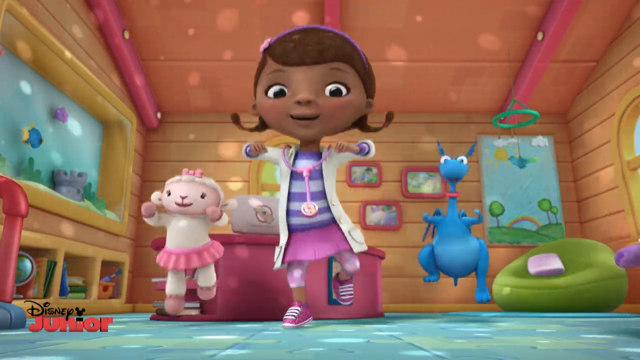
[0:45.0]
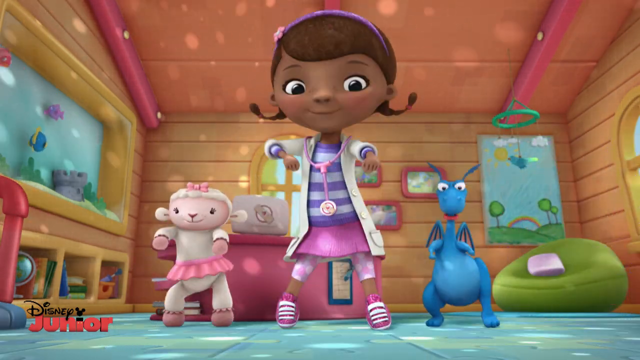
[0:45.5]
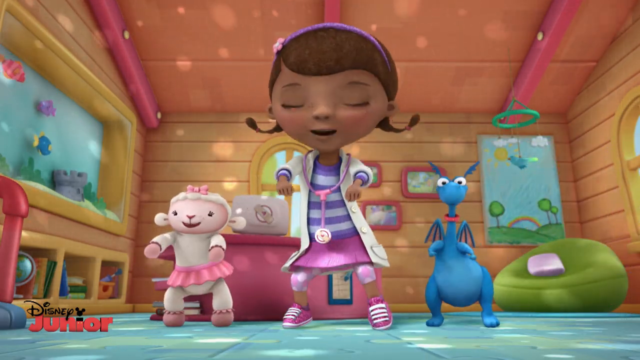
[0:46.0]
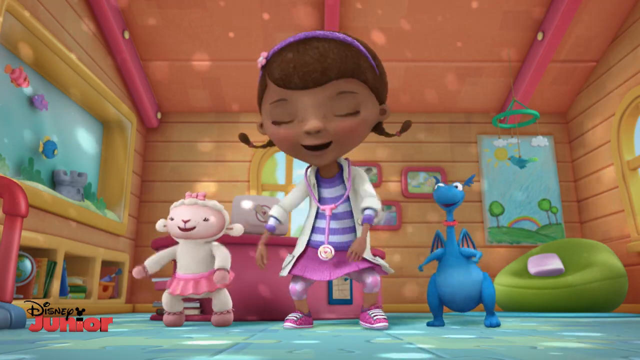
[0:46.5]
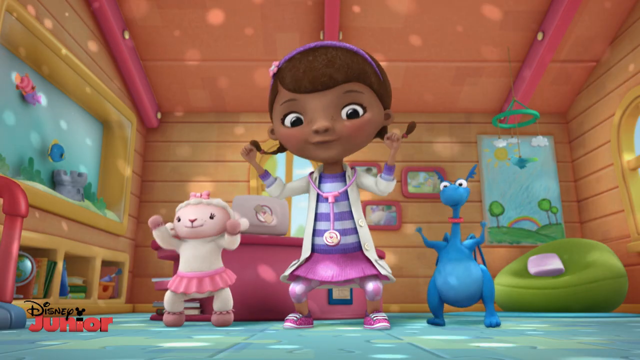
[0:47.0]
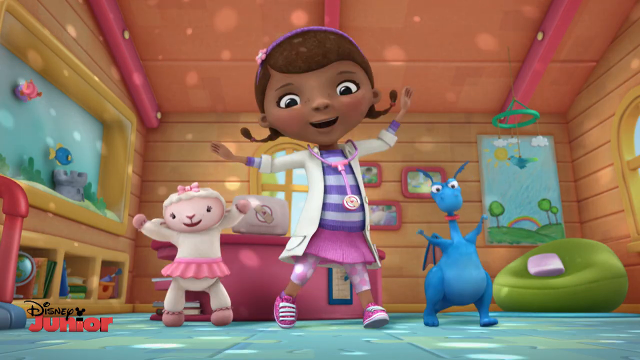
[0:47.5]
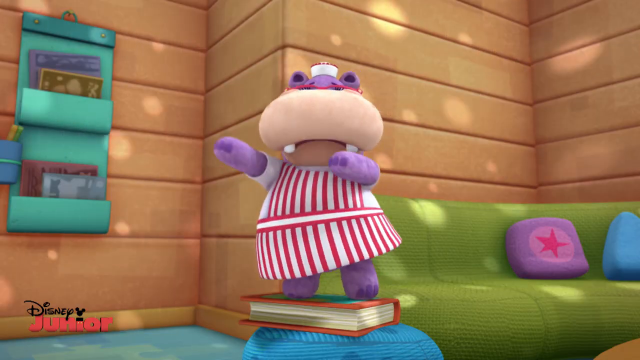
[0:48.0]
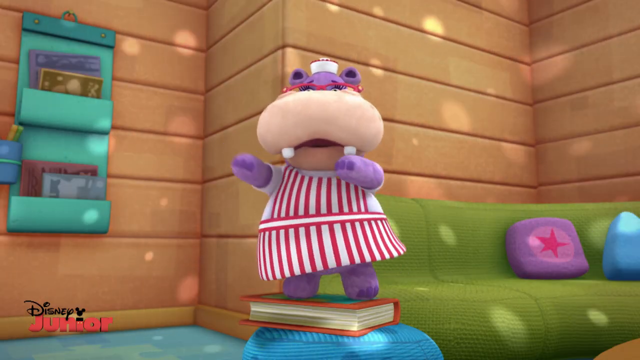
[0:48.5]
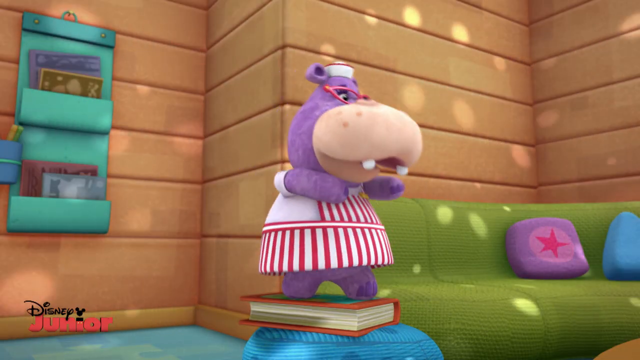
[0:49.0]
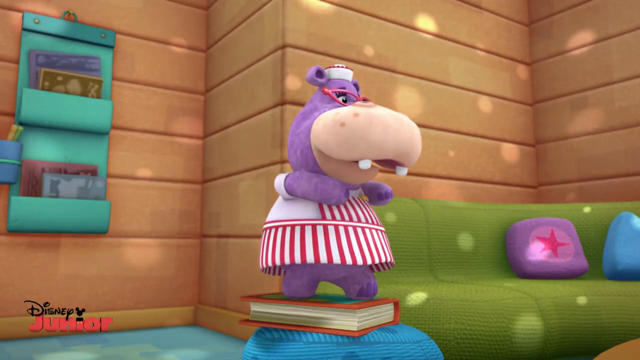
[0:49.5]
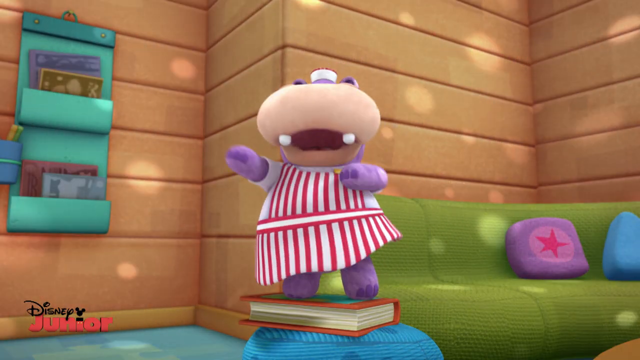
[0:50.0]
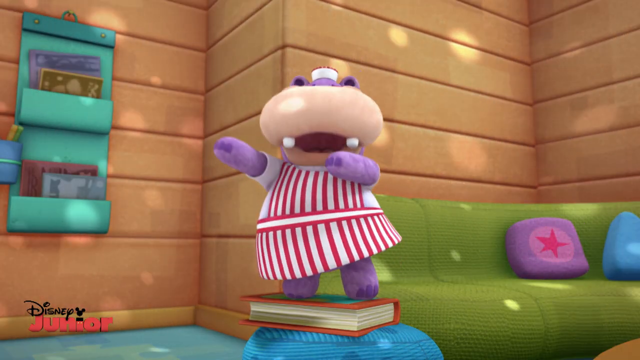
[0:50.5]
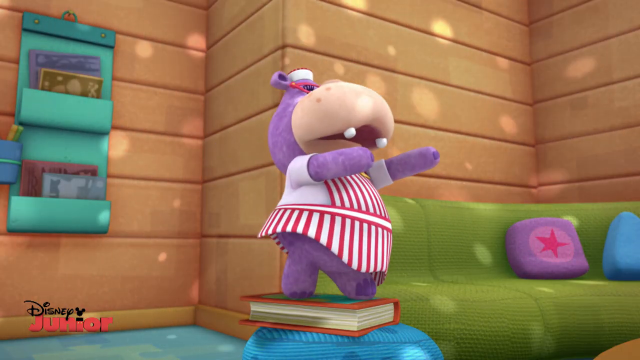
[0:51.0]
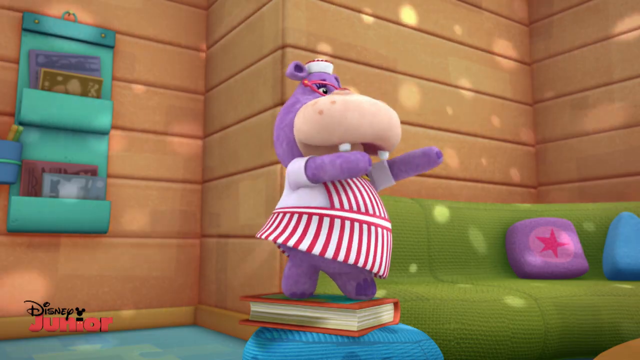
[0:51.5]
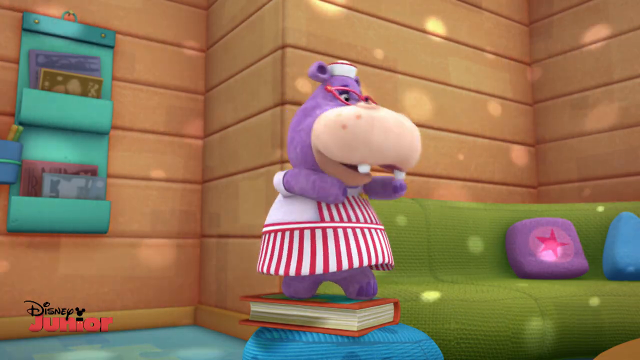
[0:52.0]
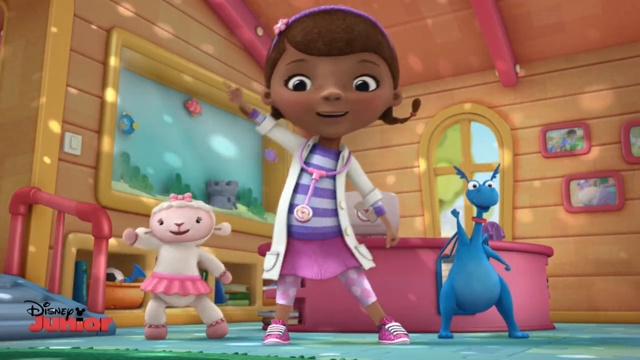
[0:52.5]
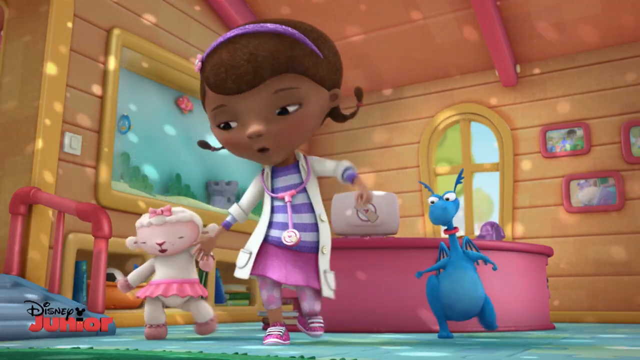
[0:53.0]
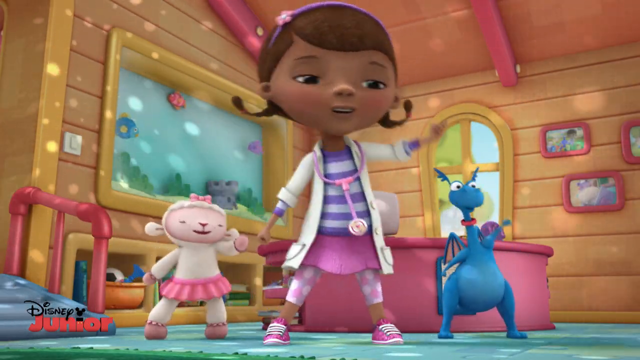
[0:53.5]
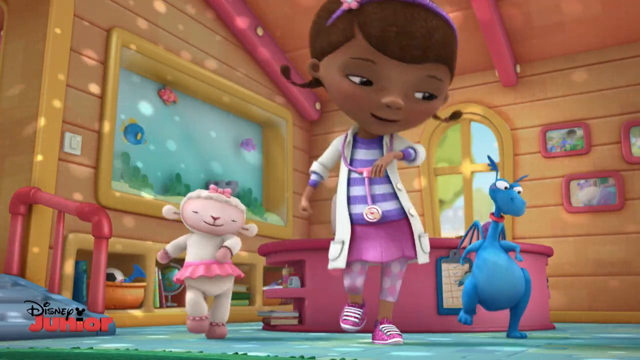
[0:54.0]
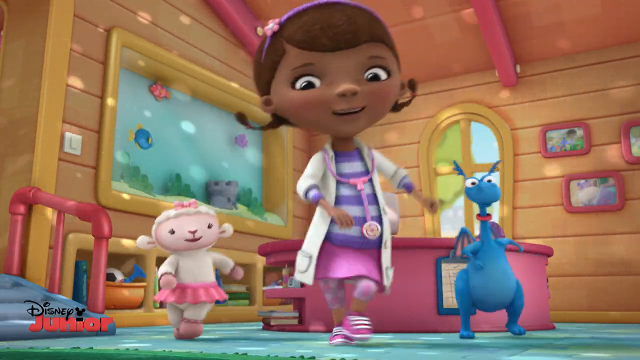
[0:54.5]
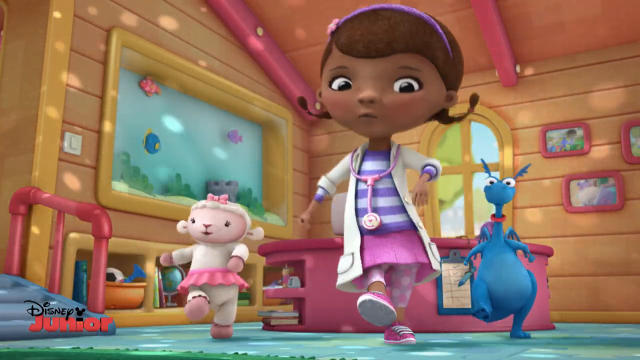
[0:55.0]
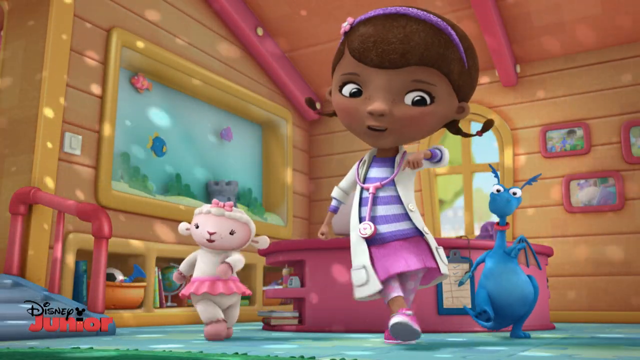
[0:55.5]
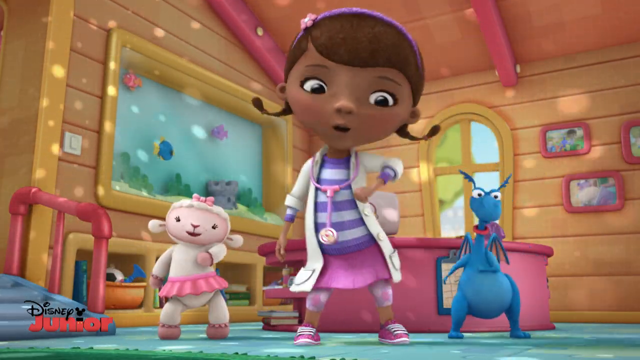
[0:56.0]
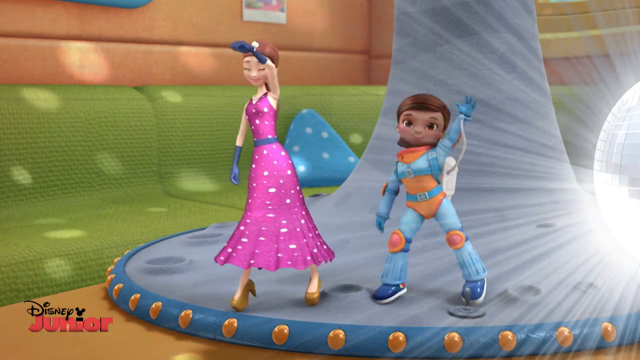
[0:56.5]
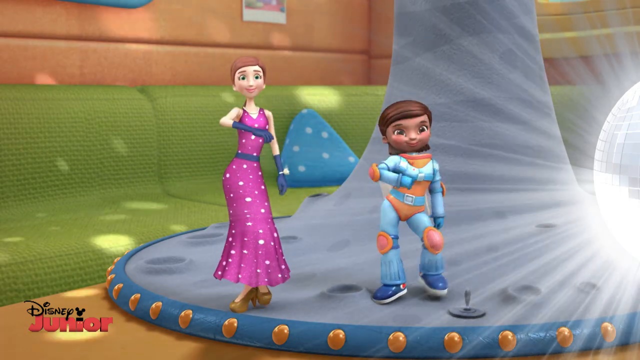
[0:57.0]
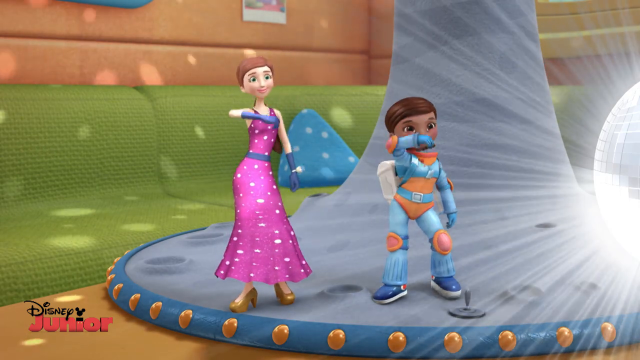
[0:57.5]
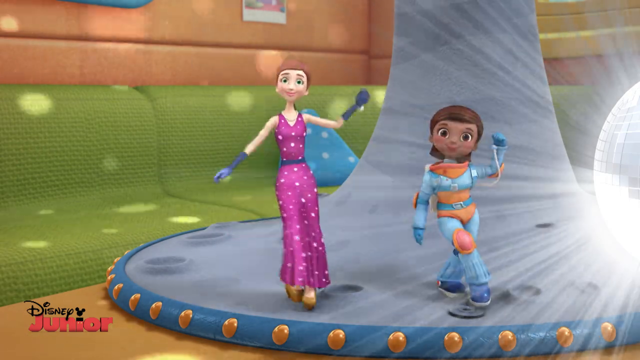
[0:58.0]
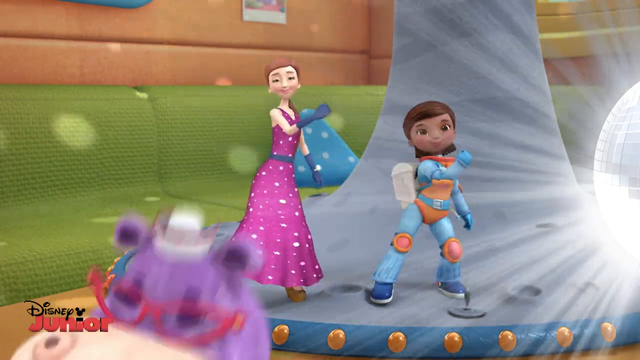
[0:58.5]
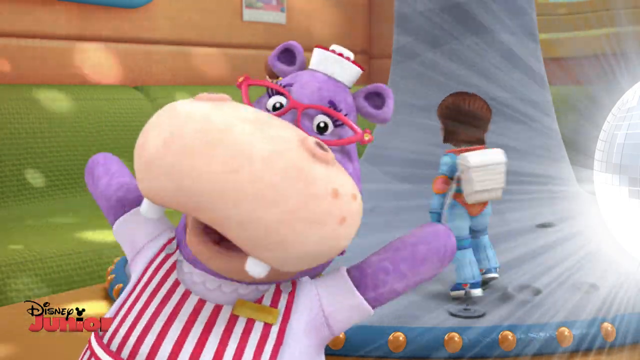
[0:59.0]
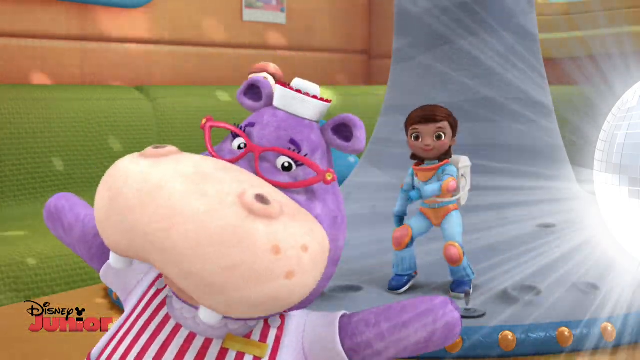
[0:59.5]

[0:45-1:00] The party is in full swing. The girl dances with the sheep and the dragon on each side of her, with a disco going on in the back. The video cuts to the little purple hippopotamus, wearing red glasses, dancing on a book and moving her arms around, then cuts back to the big girl as she continues to dance. It looks like the astronaut and the little purple doll are dancing together; the astronaut is now happy and dancing too, and everybody is dancing. At the end, the hippopotamus's face pops into the screen.